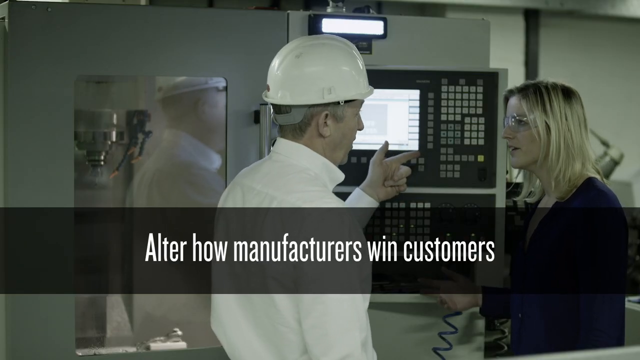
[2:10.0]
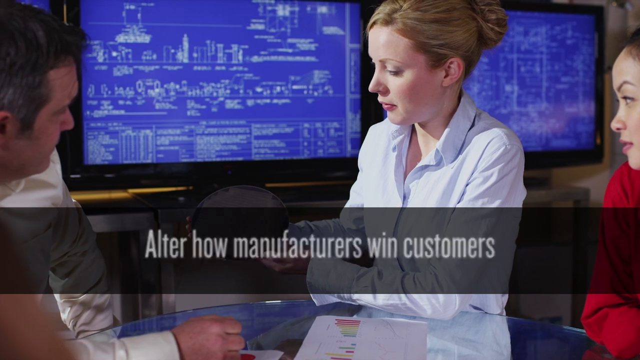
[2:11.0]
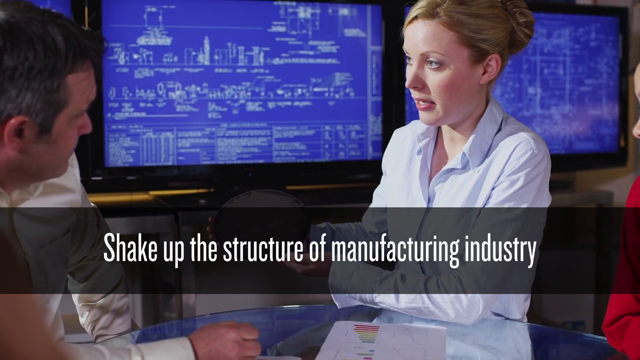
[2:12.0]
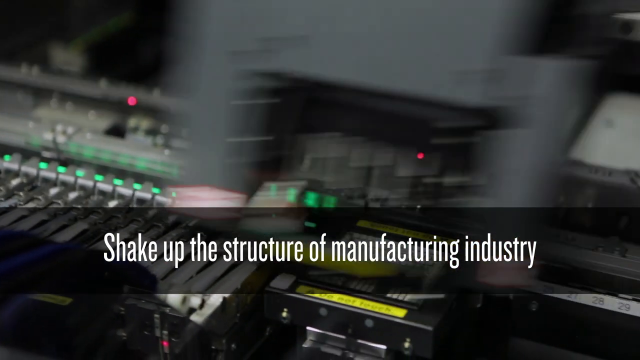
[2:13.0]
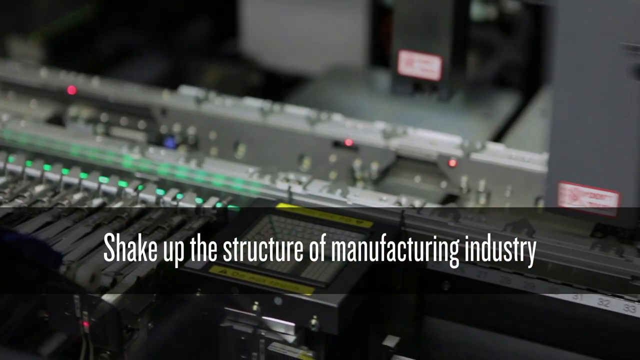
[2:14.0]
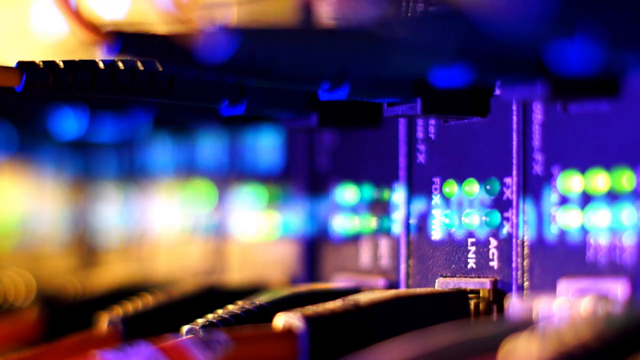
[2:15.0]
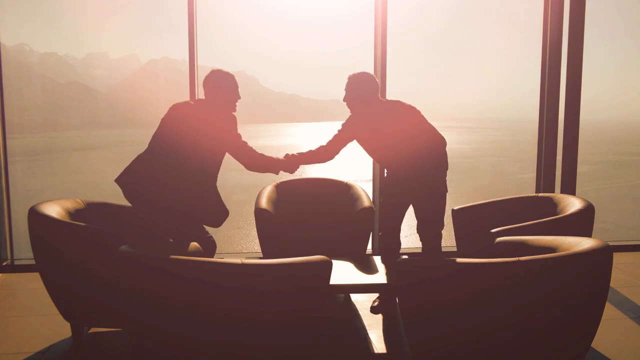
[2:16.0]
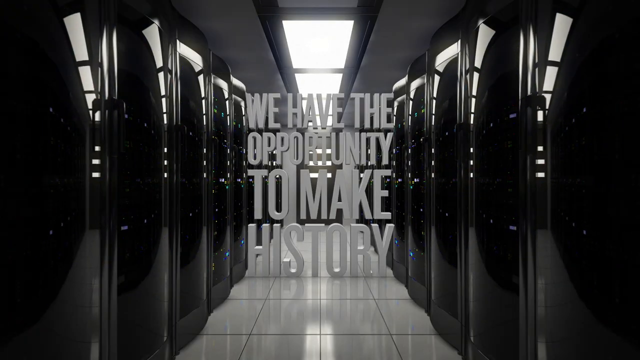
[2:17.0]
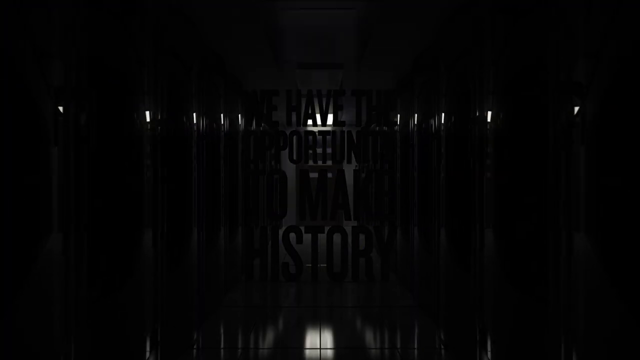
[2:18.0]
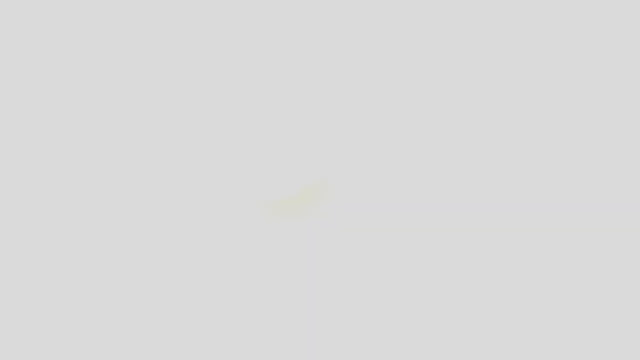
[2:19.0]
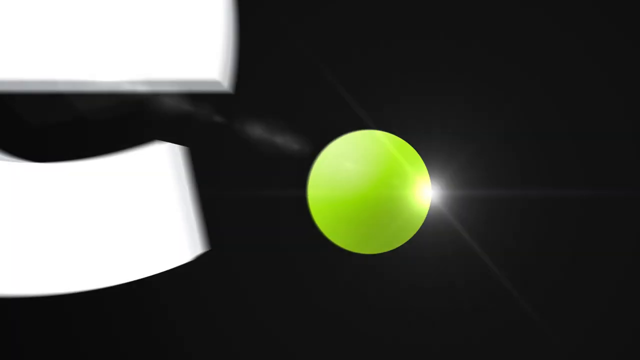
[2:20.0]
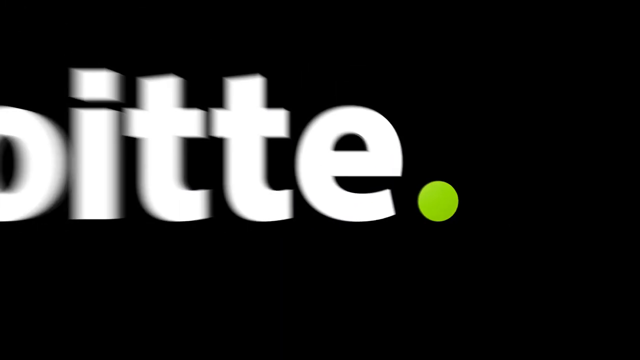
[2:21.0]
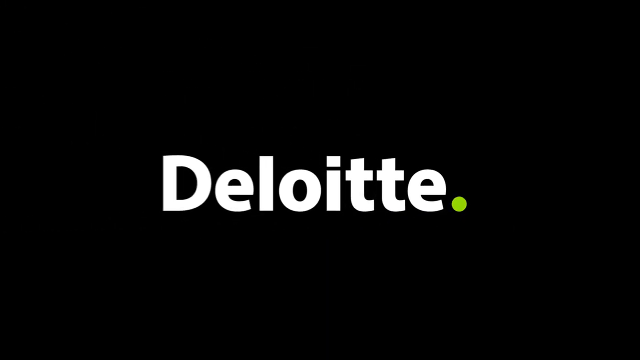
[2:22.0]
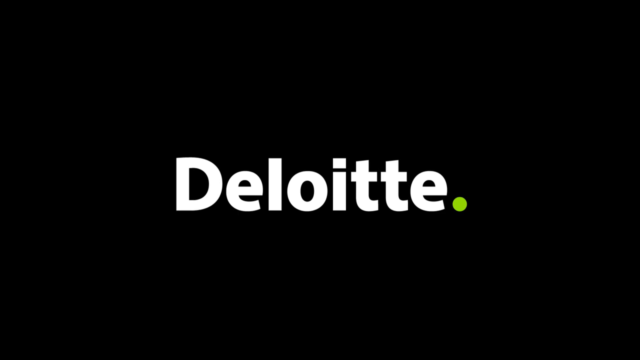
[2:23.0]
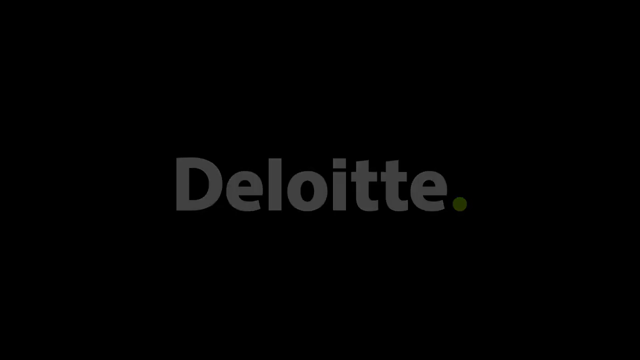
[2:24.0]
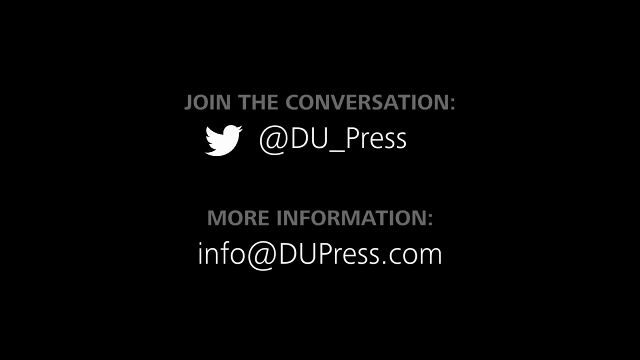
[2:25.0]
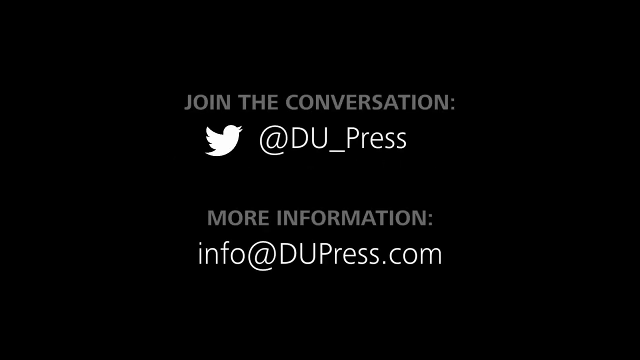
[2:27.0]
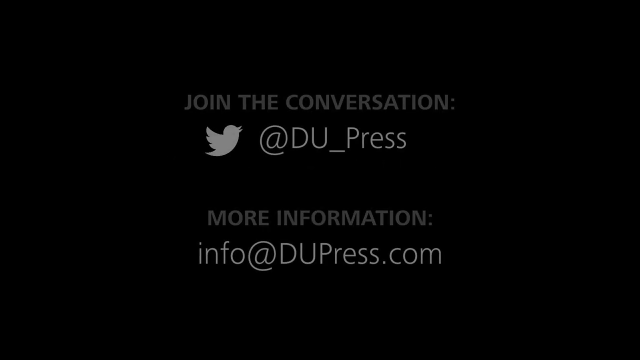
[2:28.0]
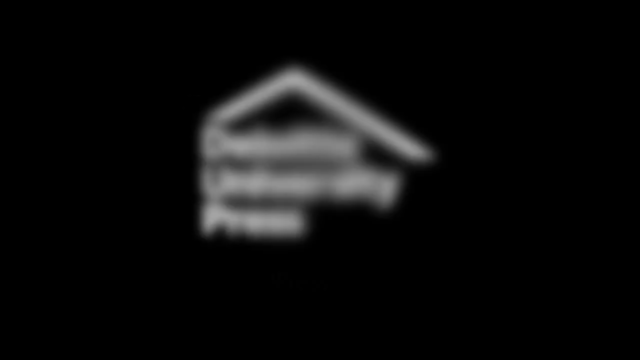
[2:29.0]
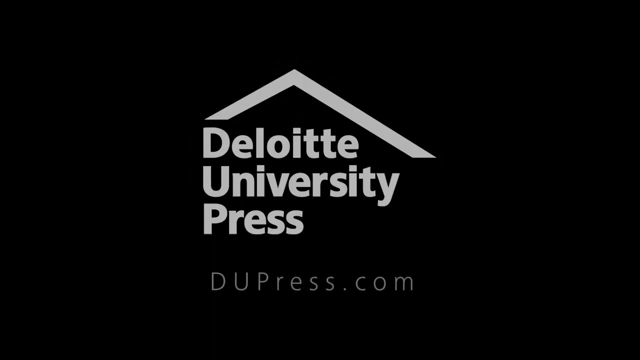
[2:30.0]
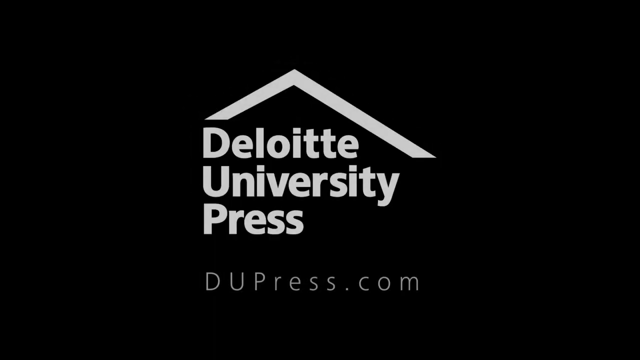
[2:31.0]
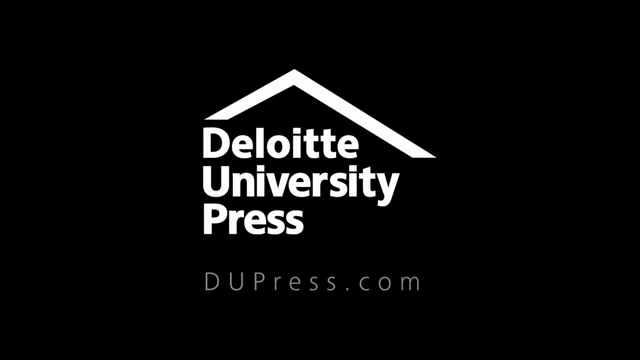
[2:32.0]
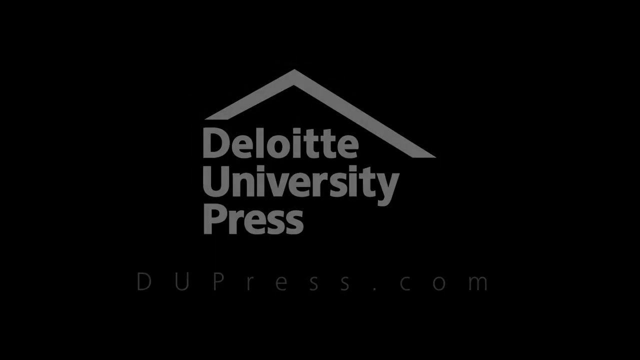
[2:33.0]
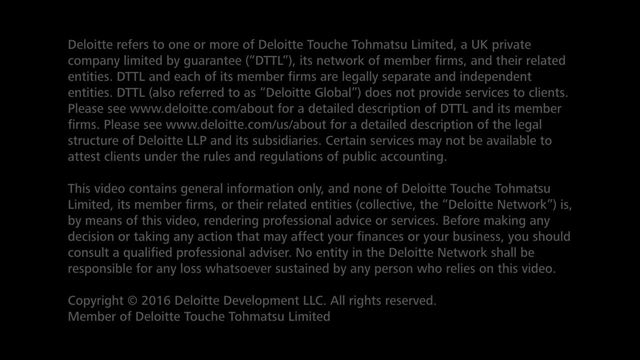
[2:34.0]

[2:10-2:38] A screen pops up with individuals communicating with one another, some with computer screens behind them, and text says "alter how manufacturers win customers" and then "shake up the structure of manufacturing industry". The background changes to different images of the inner workings of a computer, then to an image of two men shaking hands, and then to what appears to be some sort of room with some machinery, with the text "we have the opportunity to make history". The background then changes to all black, and the word "Deloitte" pops up in white letters with a green period beside it at the bottom. The screen is black again, with "join the conversation" at the top, a picture of a white bird, then "more information" below, and an email address on the screen.